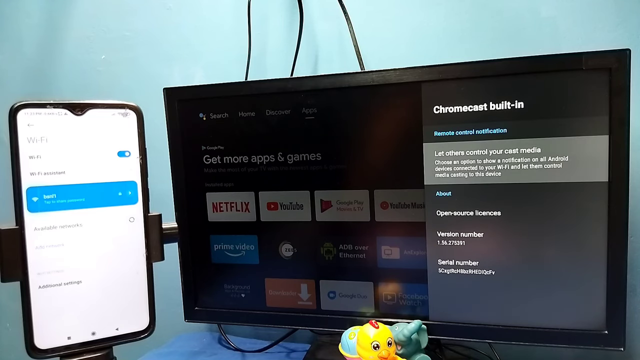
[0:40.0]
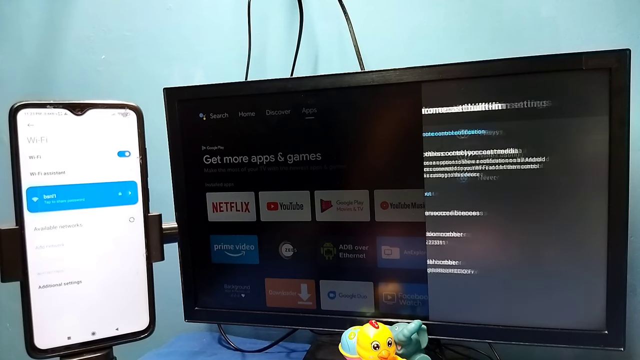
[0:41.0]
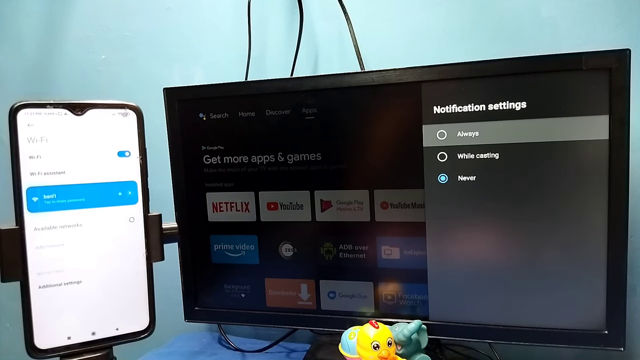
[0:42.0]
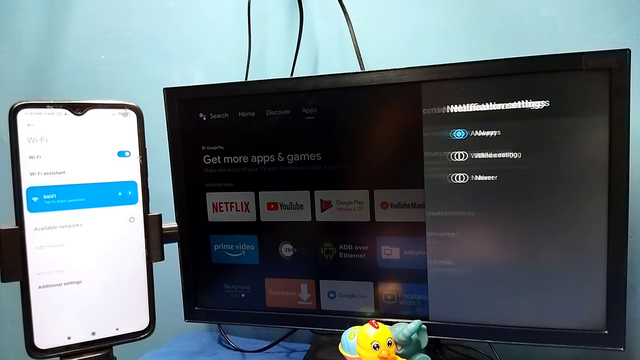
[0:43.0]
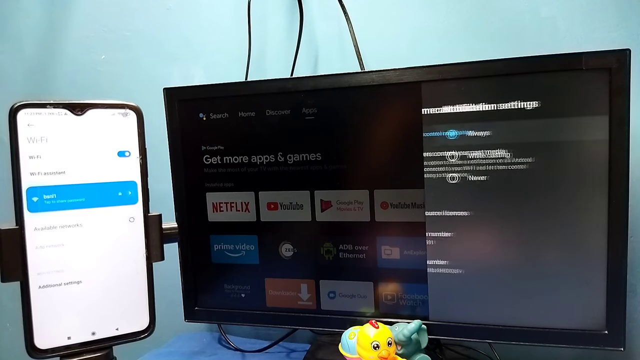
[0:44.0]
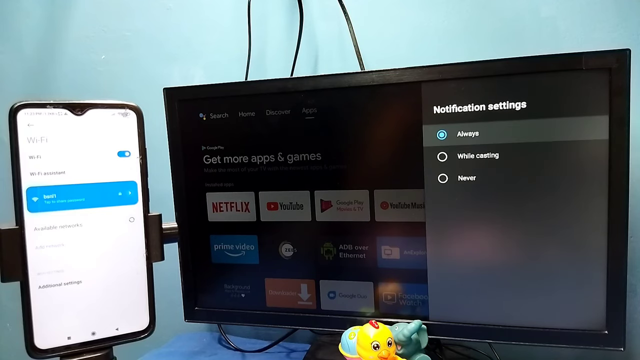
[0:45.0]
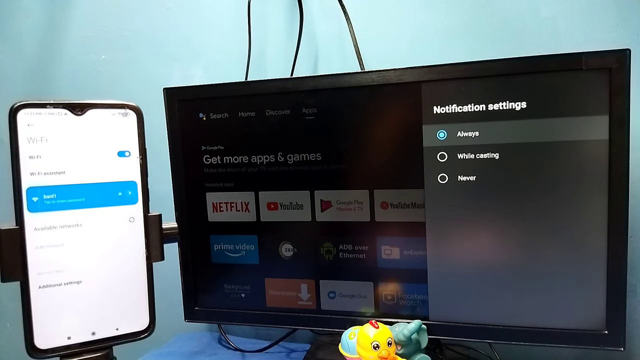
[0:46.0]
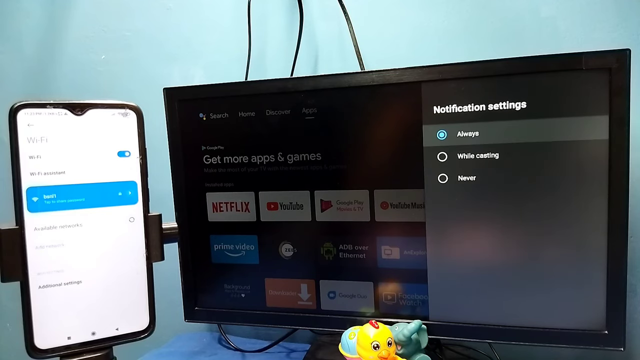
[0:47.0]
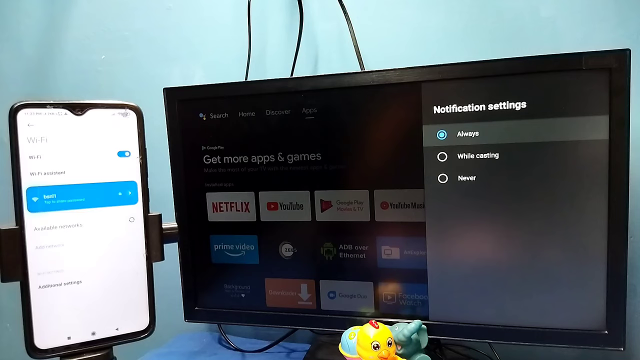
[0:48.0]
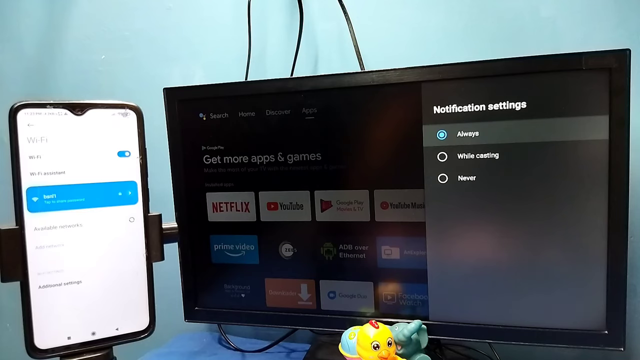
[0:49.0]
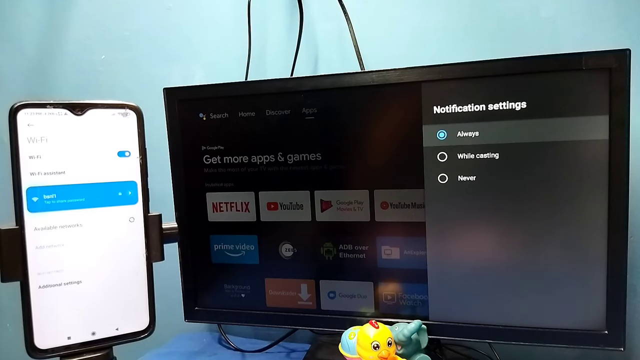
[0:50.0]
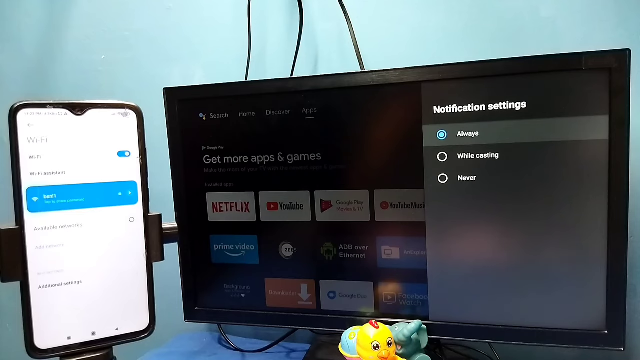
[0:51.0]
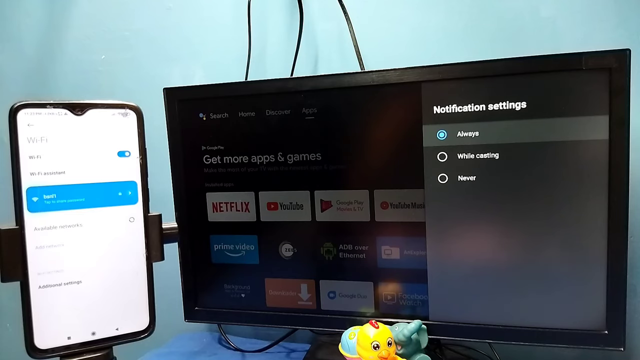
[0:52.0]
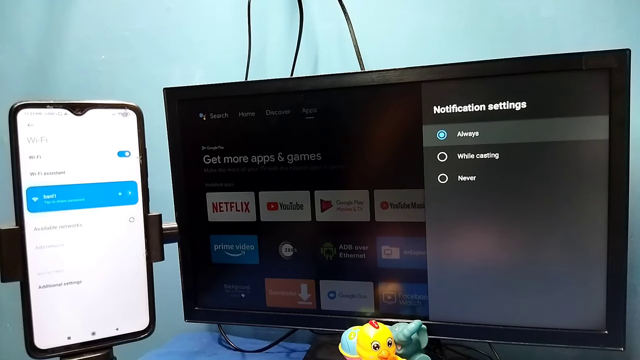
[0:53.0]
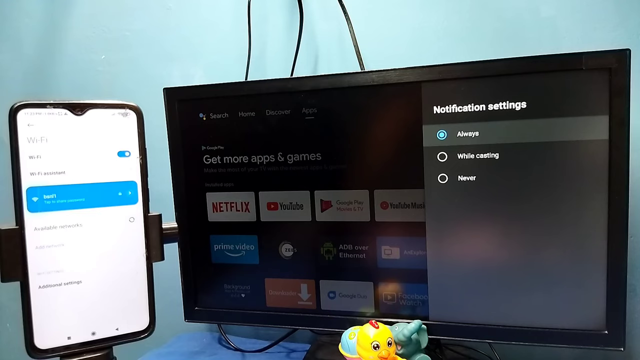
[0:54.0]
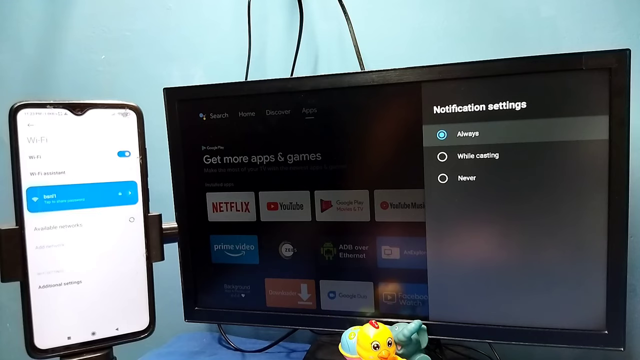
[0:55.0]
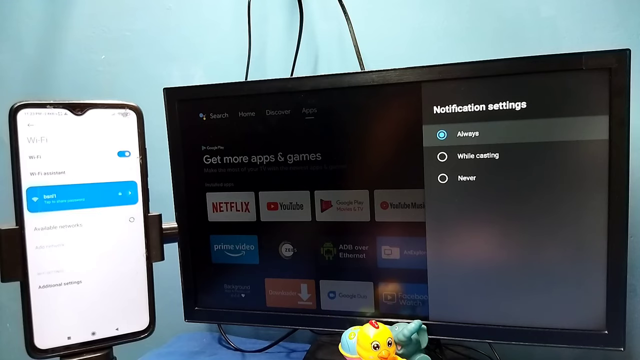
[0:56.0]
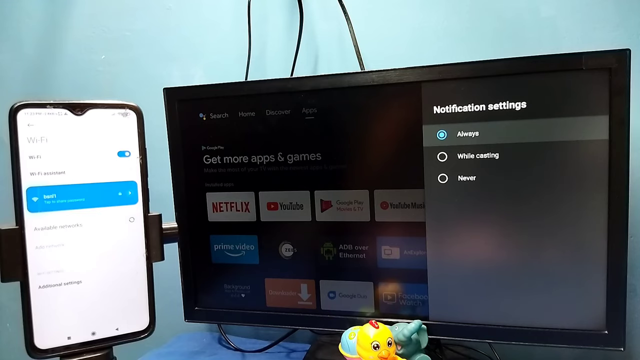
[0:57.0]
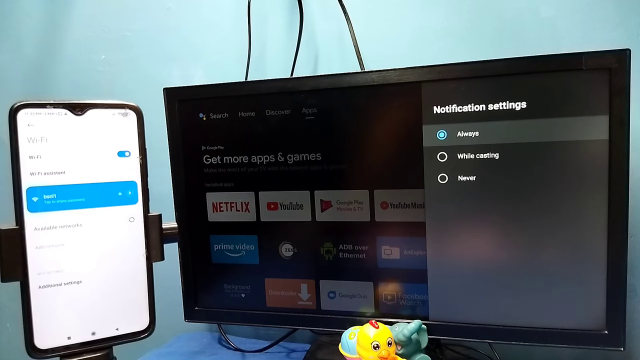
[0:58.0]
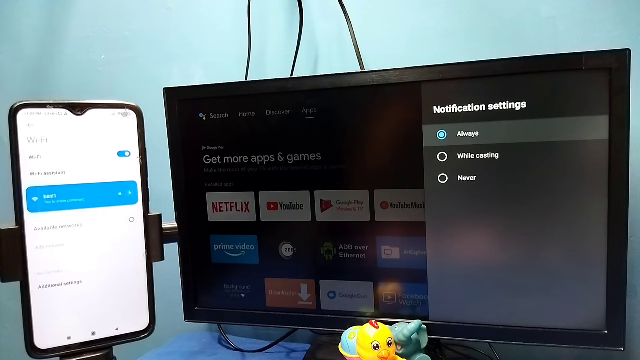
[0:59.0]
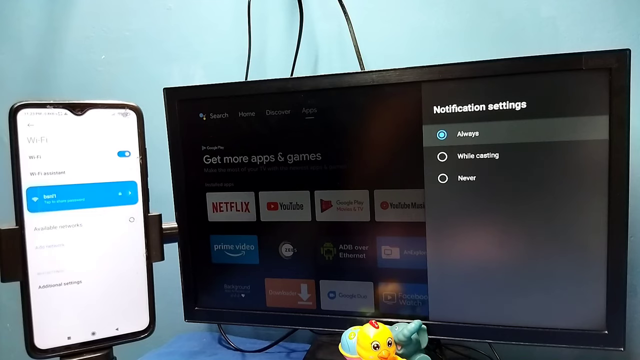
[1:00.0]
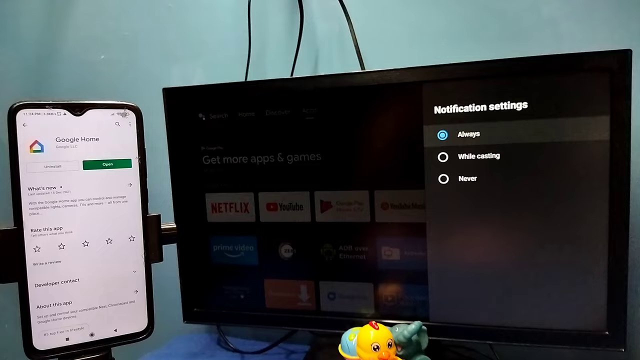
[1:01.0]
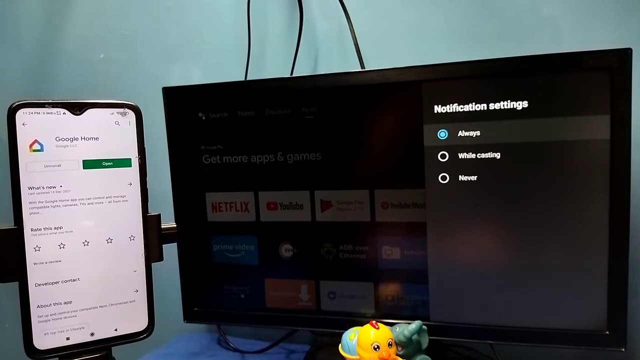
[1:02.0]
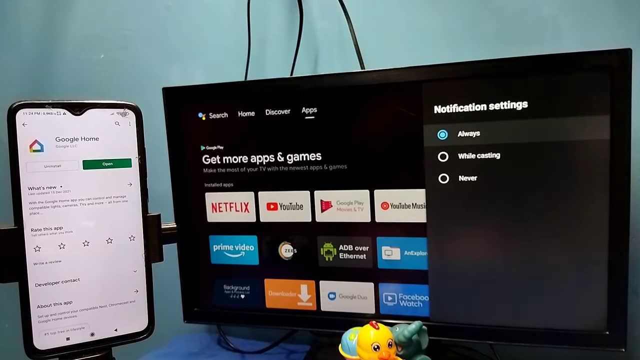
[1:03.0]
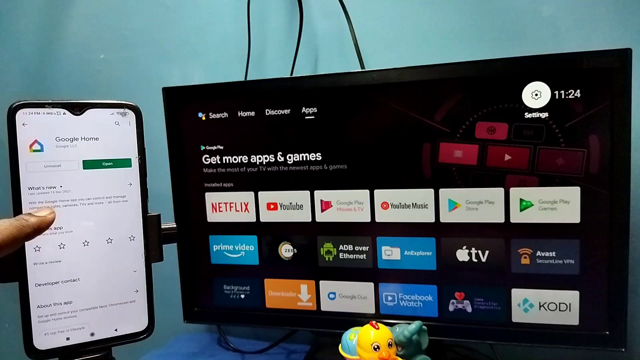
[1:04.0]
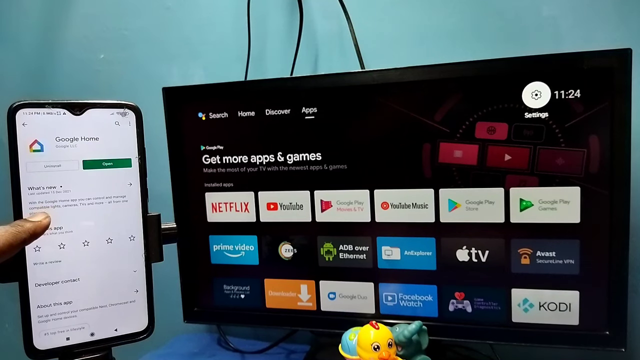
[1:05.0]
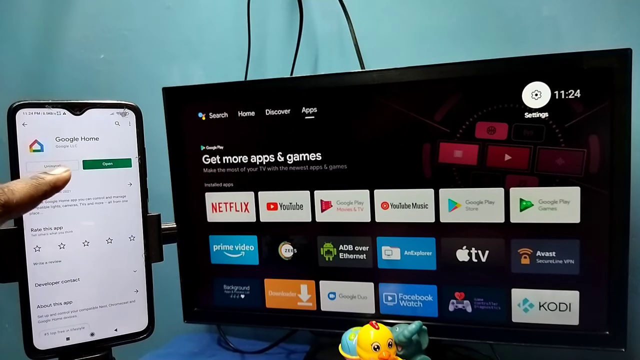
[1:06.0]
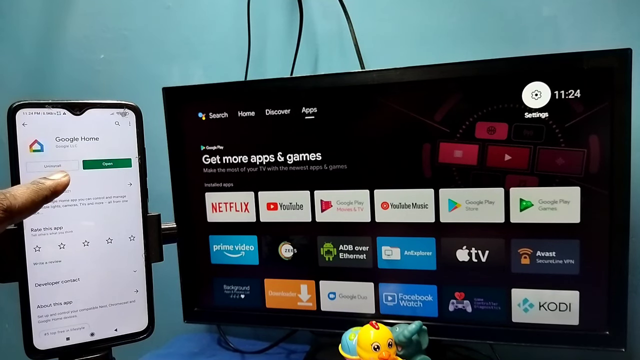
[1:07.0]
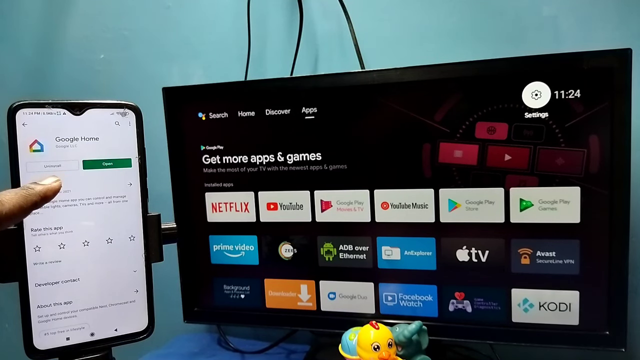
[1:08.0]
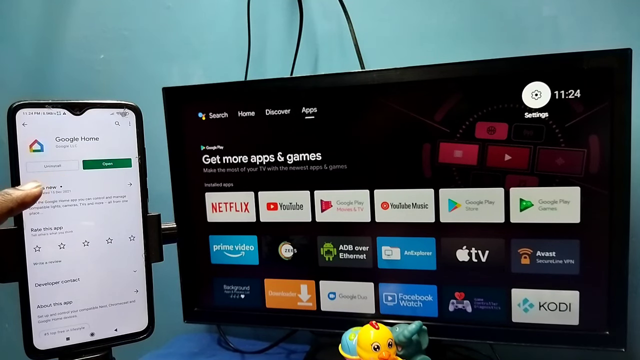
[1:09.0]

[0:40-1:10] A hand on the left points with just an index finger at the phone screen. The phone shows Google Home while the flat screen shows the apps screen. The flat screen stays at notification settings with the options "always while casting" and "never", and "always" is highlighted. The view goes to notification settings, then to Comcast built-in, and back to notification settings. The phone then shows Google Home, while the flat screen shows just the apps screen, with the finger on the left pointing at the screen.